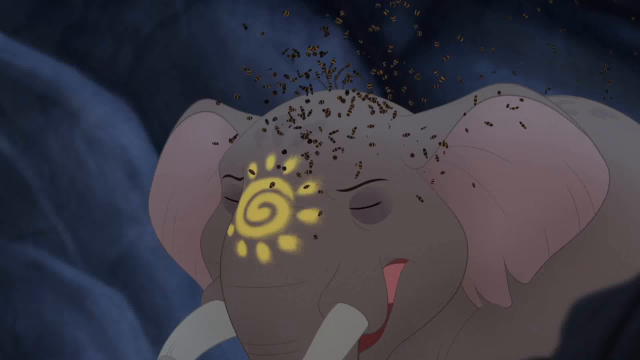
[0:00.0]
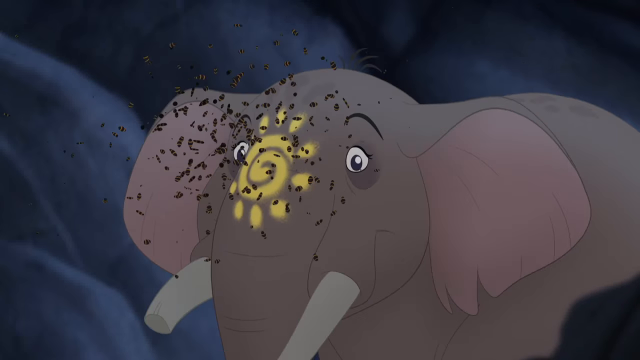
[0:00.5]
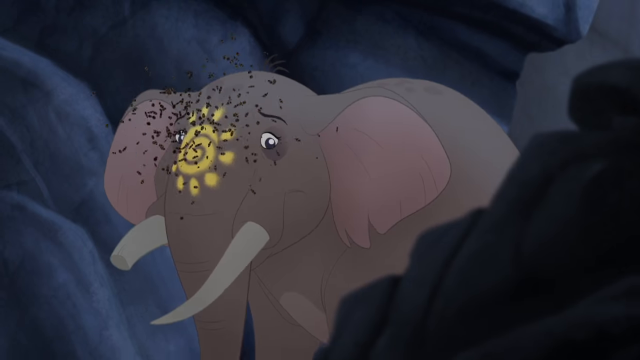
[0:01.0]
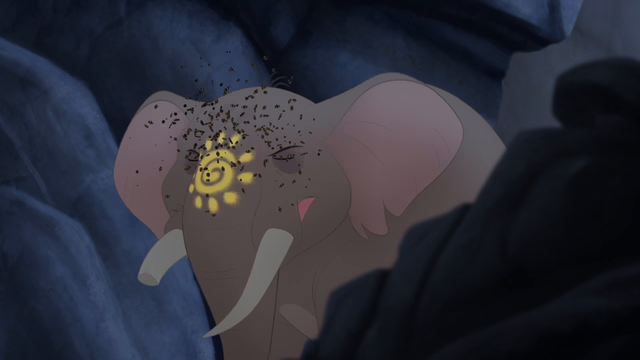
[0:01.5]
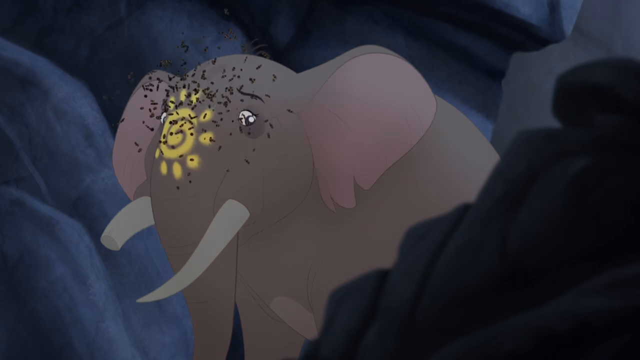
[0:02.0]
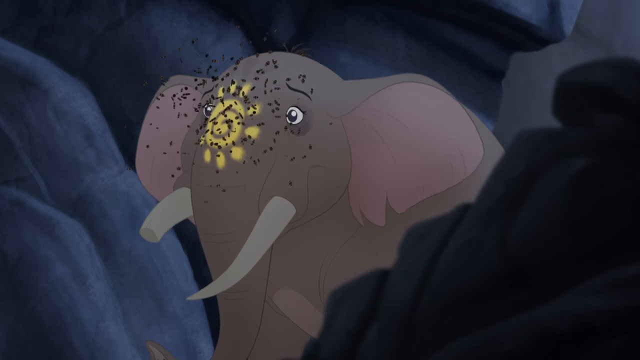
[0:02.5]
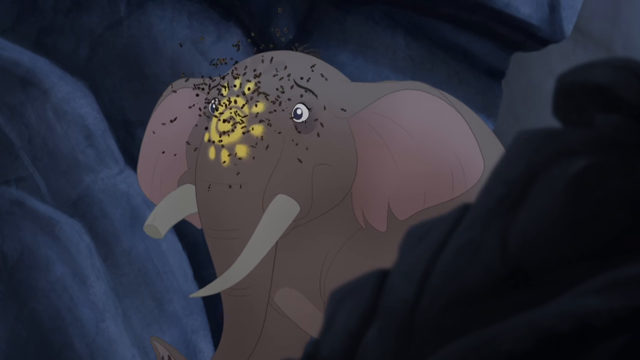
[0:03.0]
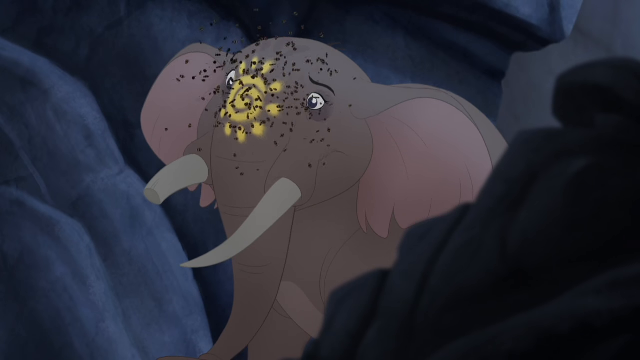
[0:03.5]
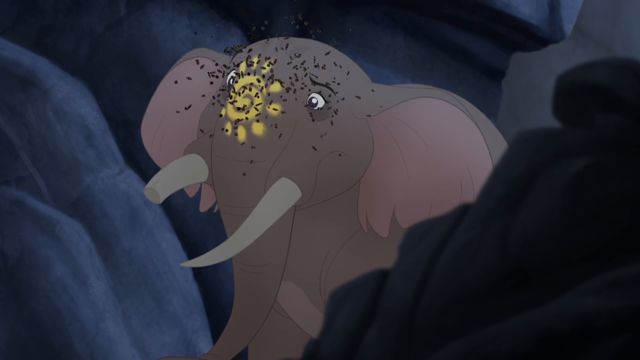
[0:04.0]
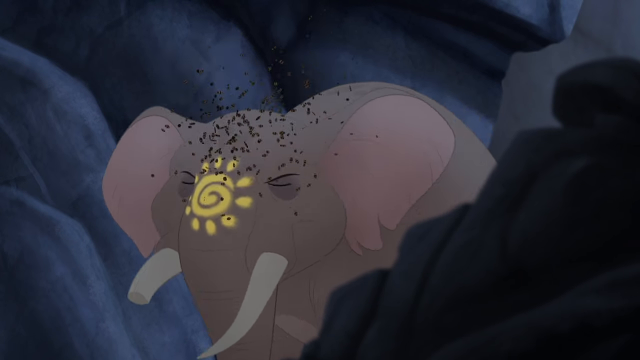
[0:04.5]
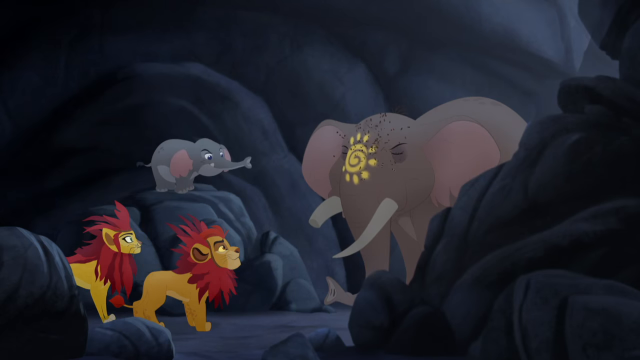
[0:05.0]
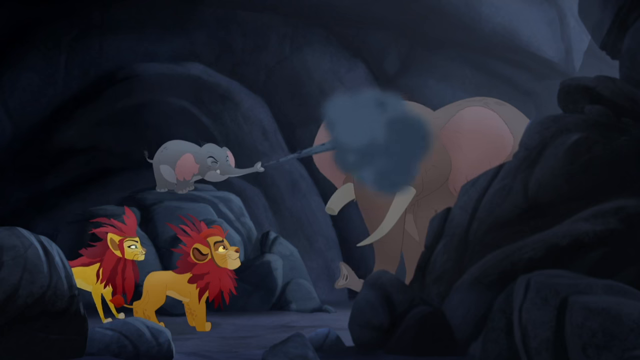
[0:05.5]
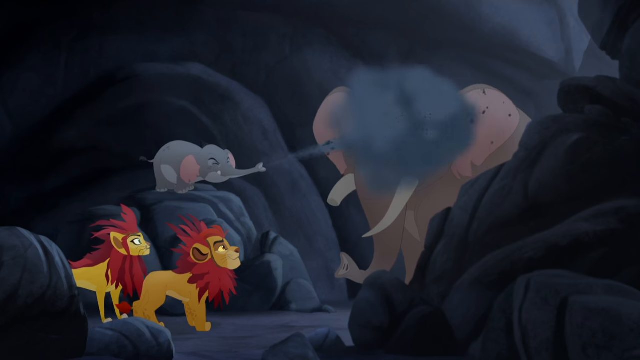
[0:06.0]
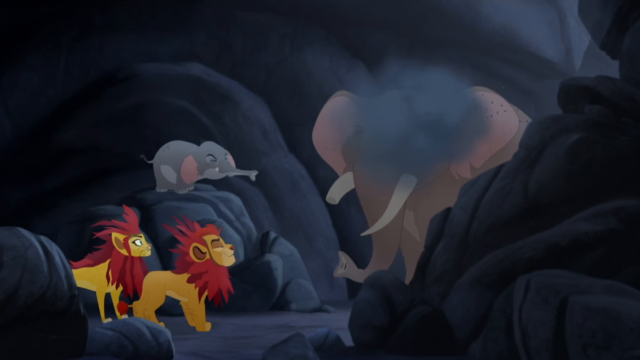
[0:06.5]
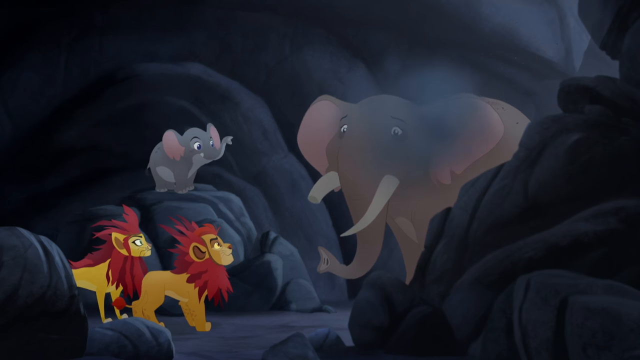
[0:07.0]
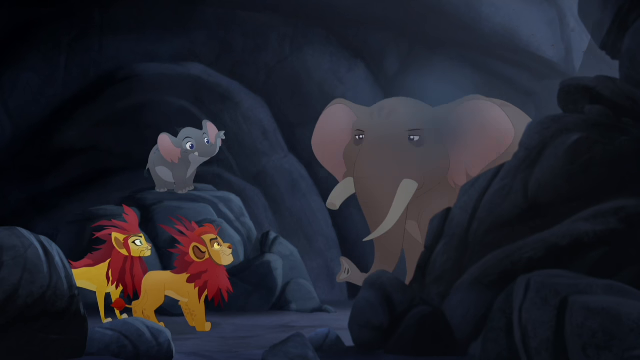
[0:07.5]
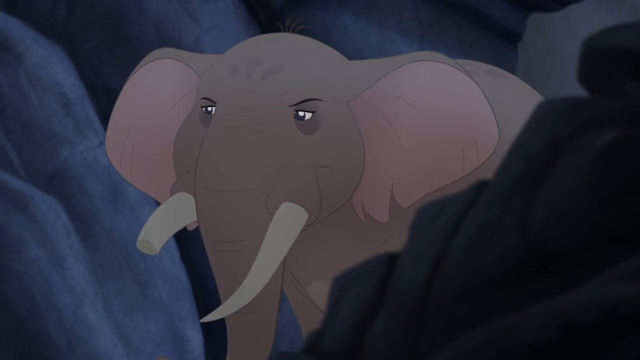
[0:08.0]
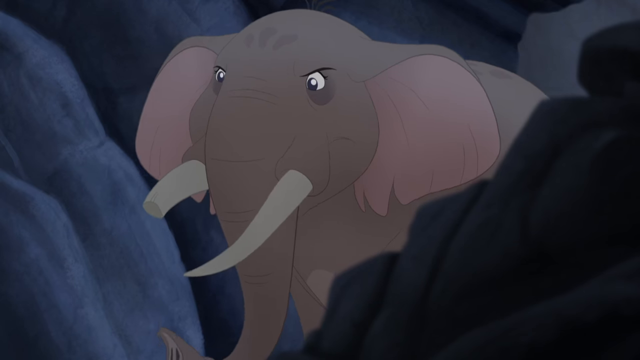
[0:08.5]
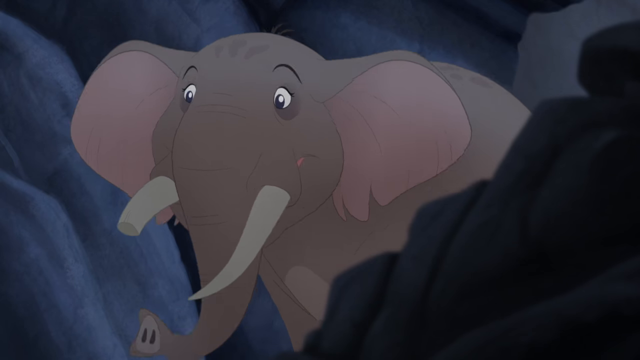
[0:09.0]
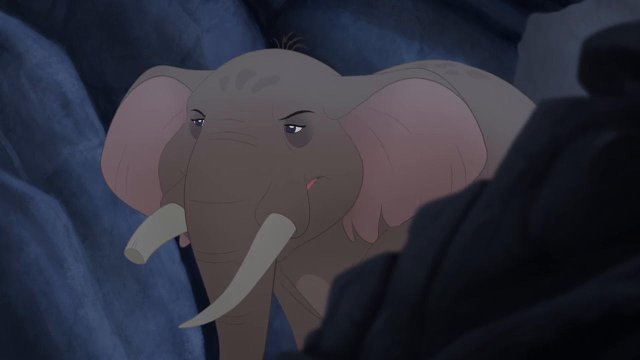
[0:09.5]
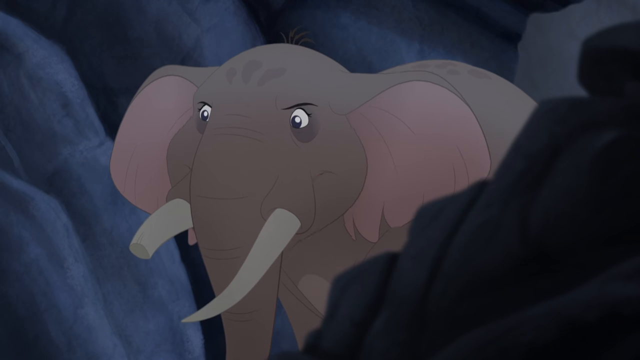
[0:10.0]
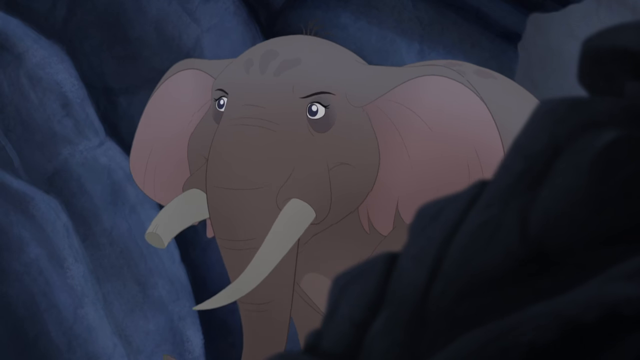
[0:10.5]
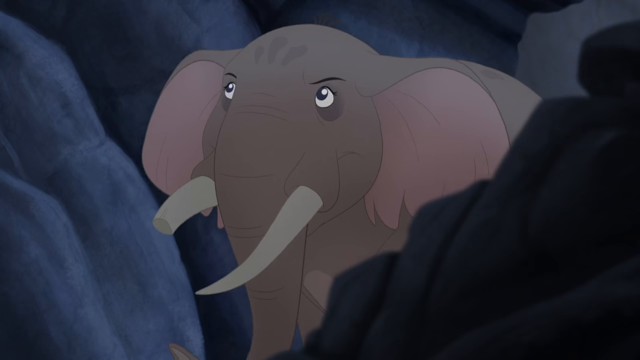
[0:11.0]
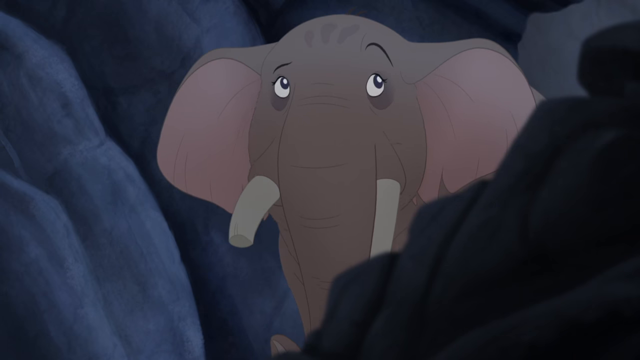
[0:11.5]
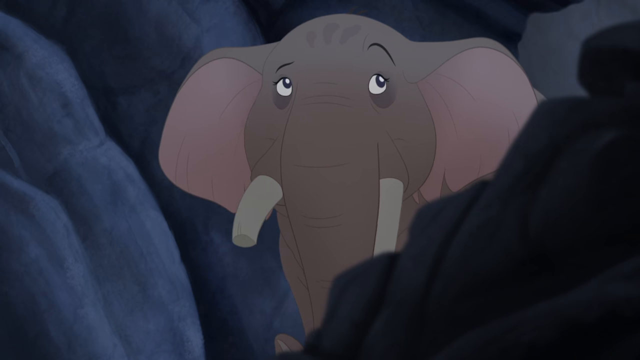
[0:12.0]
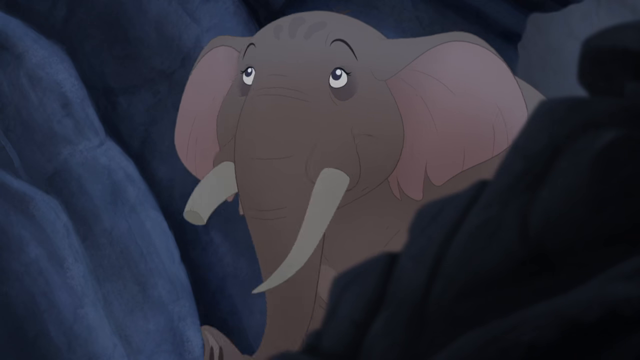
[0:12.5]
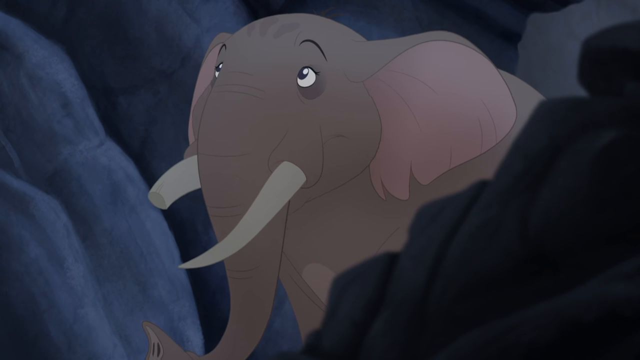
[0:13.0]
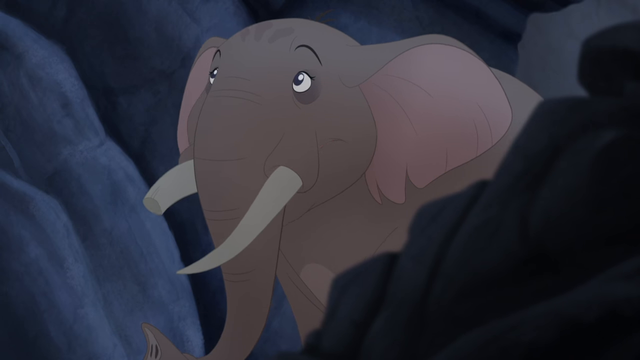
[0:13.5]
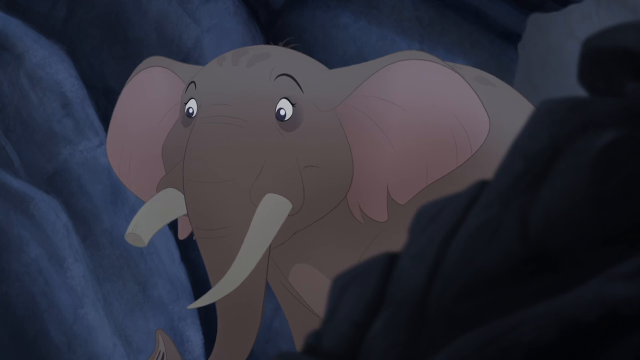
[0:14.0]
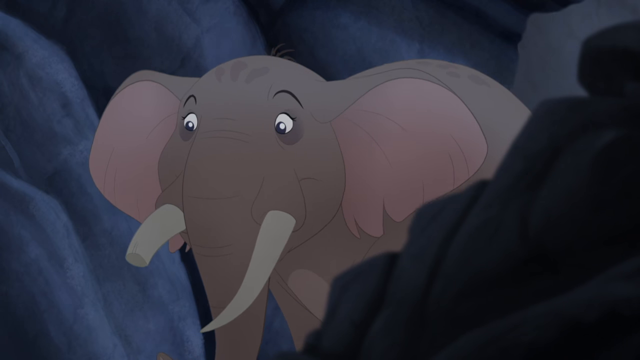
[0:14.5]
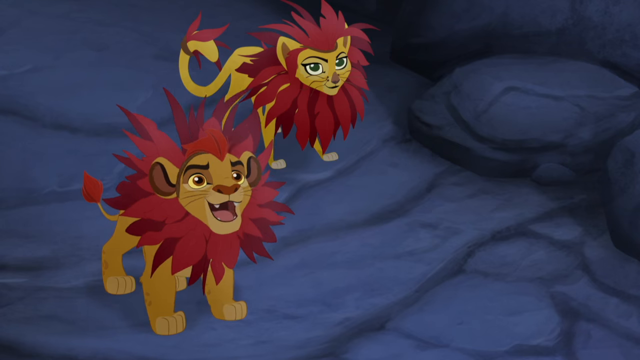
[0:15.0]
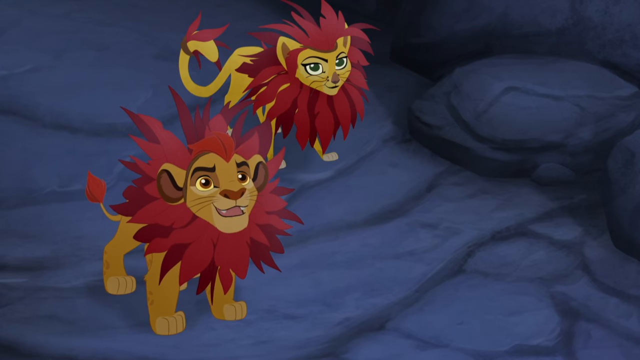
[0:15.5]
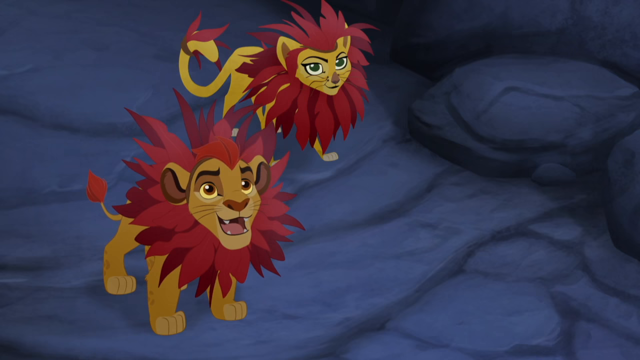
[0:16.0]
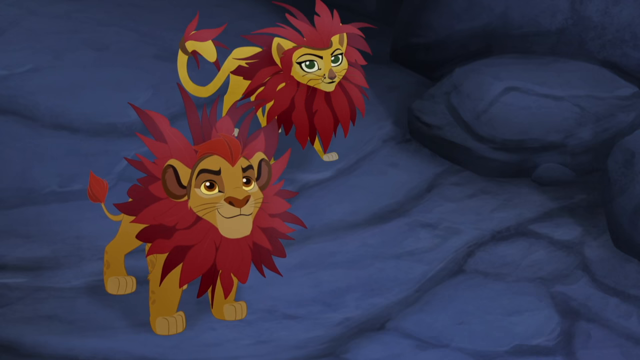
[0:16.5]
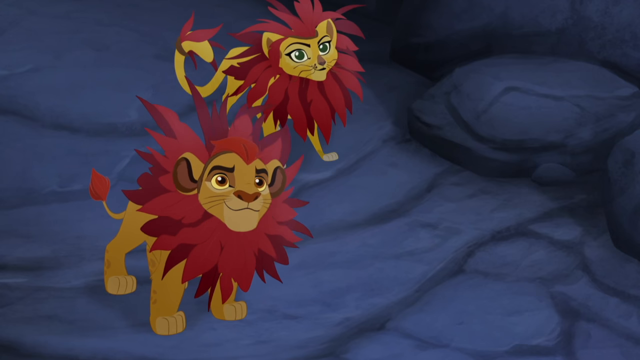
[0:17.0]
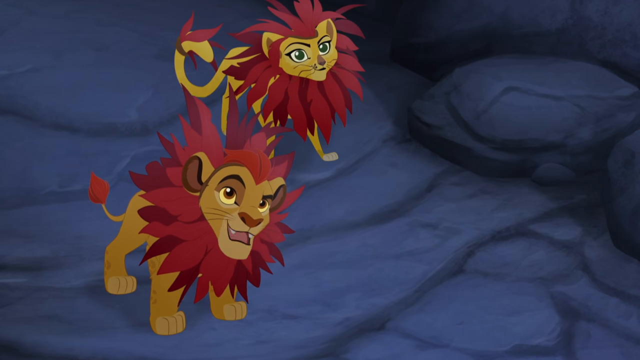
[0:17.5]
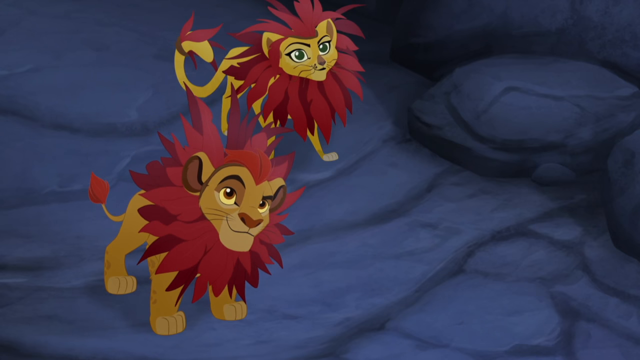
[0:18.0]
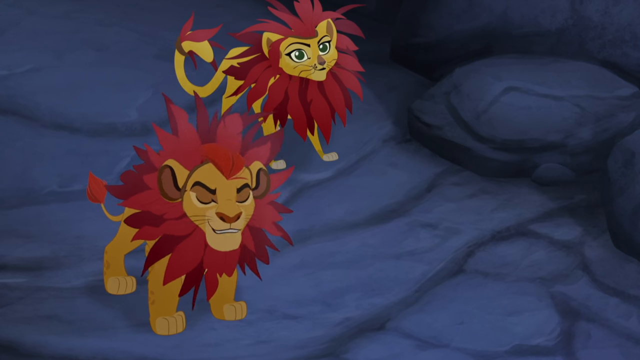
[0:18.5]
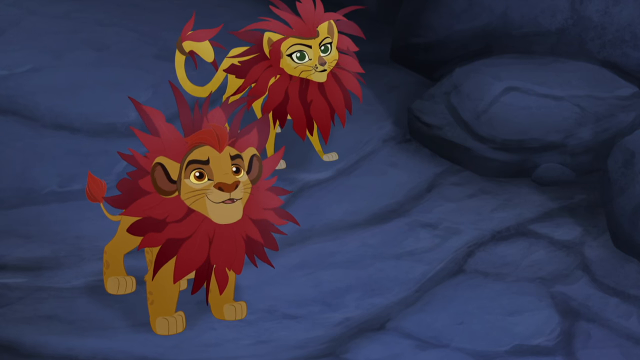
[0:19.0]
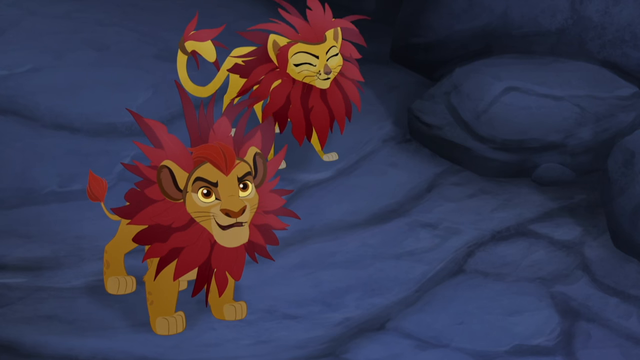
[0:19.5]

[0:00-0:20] A cartoonish elephant appears, with a little swirly design on its forehead or right above its trunk that sort of looks like a little sun. Some little insect-looking things that look like gnats or flies buzz around its head. The scene shows three other creatures besides this elephant, which is the largest animal on the screen. A baby elephant standing on a rock squirts something onto the big elephant's face, apparently trying to make the insects go away. Two lion-looking creatures with yellow fur and red manes are in the bottom left corner of the screen. The big elephant has two tusks, one whole and one broken in half. The big elephant talks and looks around. The view then shows the lions, a male and a female, and the male lion talks to the big elephant.